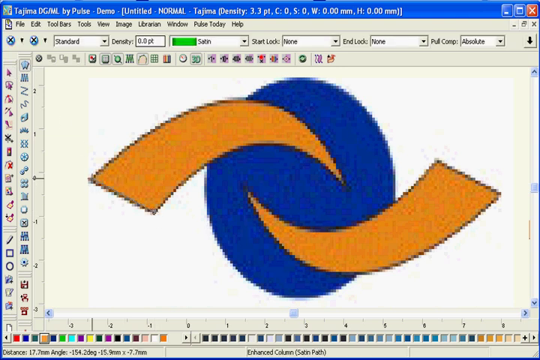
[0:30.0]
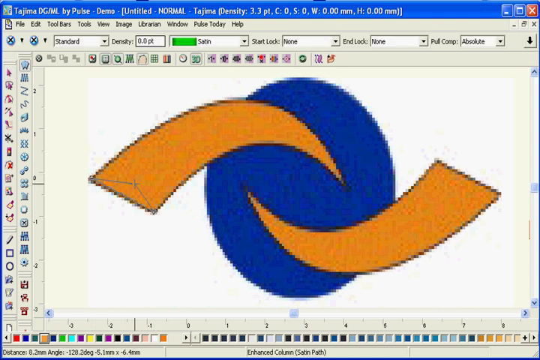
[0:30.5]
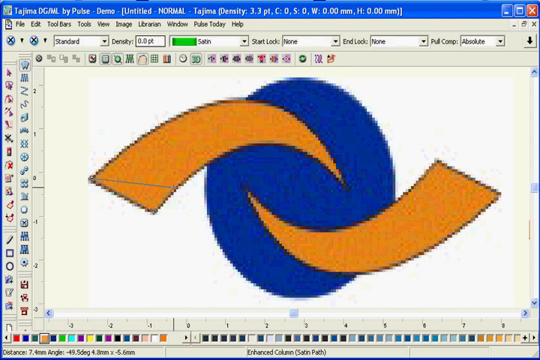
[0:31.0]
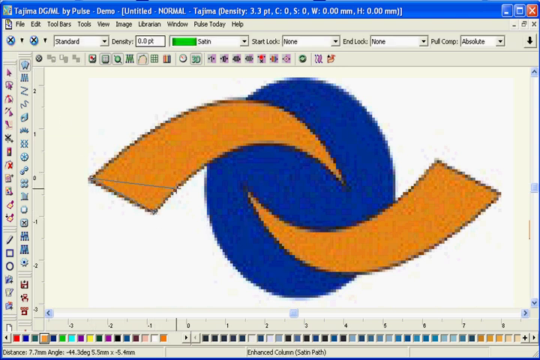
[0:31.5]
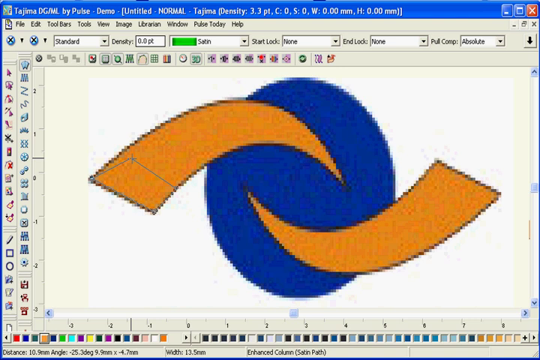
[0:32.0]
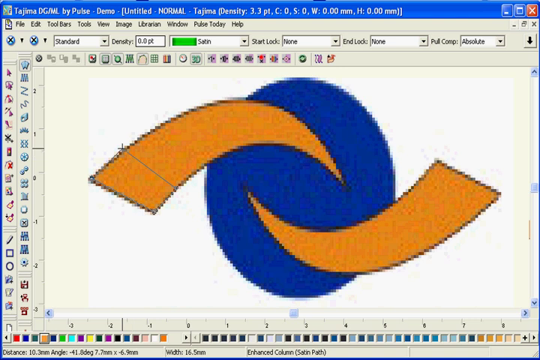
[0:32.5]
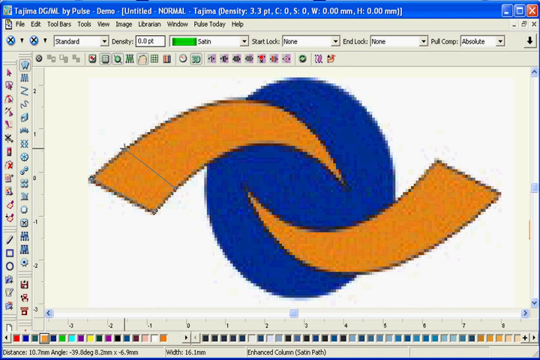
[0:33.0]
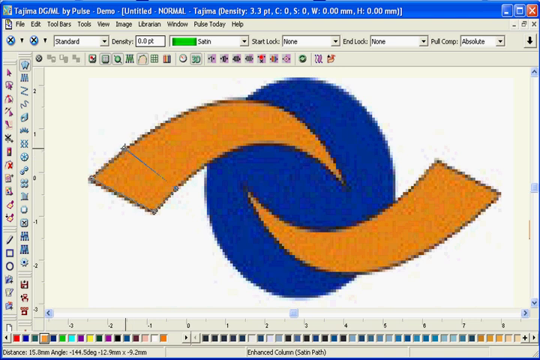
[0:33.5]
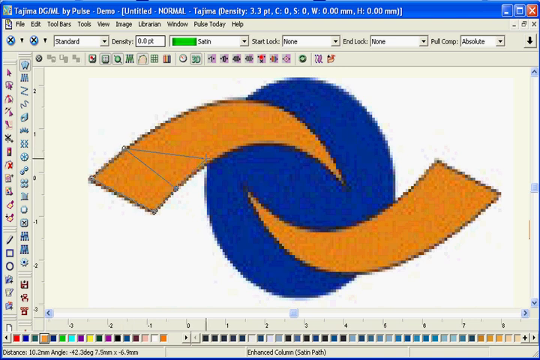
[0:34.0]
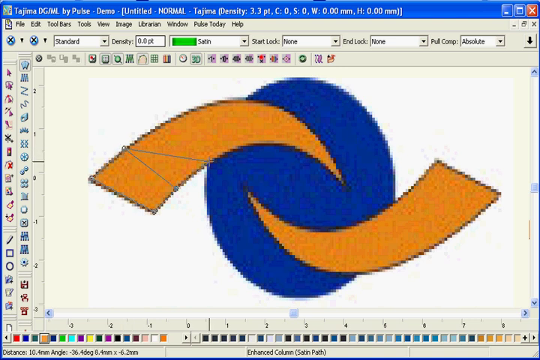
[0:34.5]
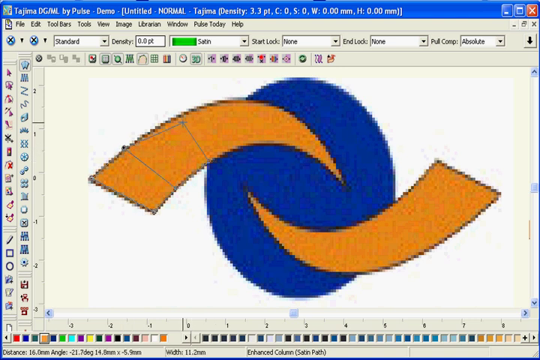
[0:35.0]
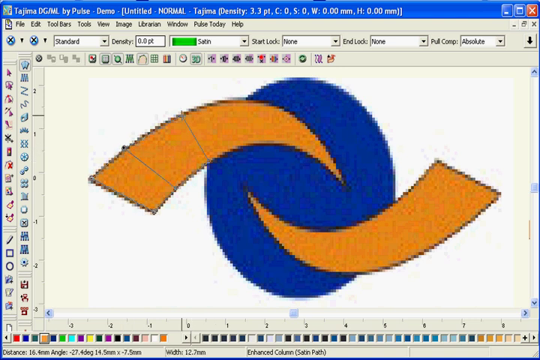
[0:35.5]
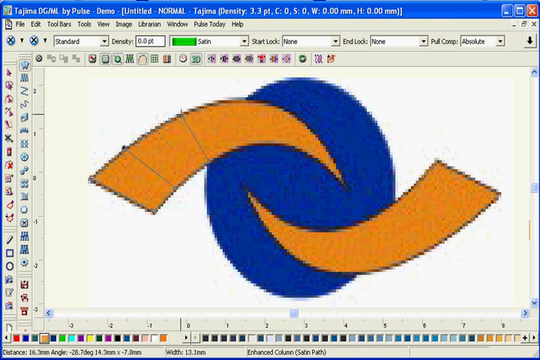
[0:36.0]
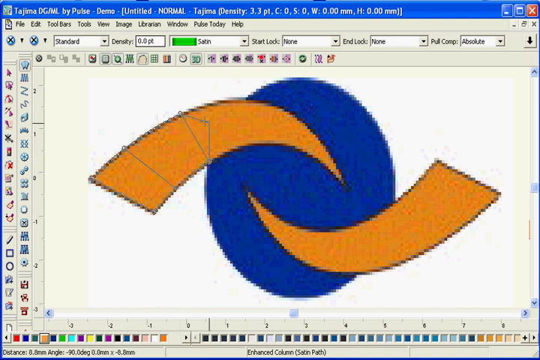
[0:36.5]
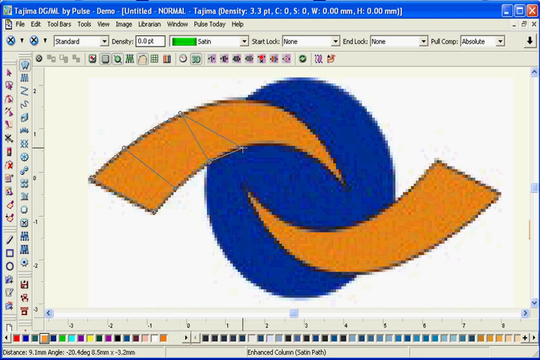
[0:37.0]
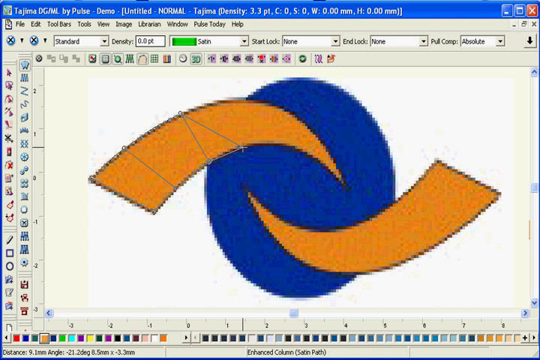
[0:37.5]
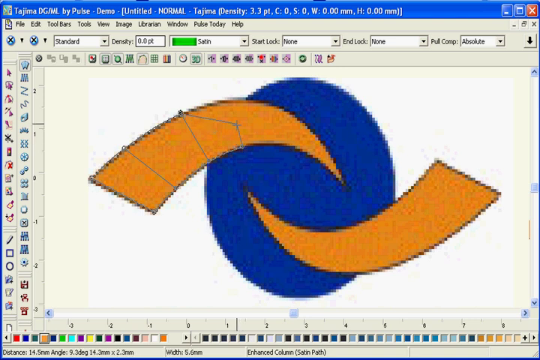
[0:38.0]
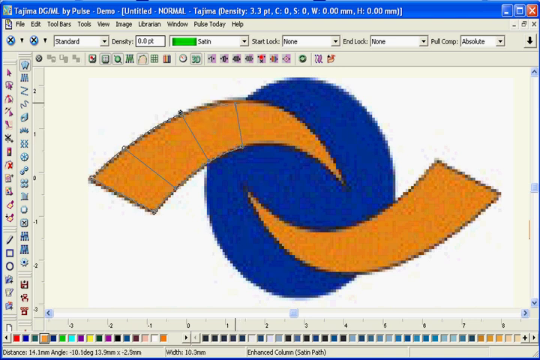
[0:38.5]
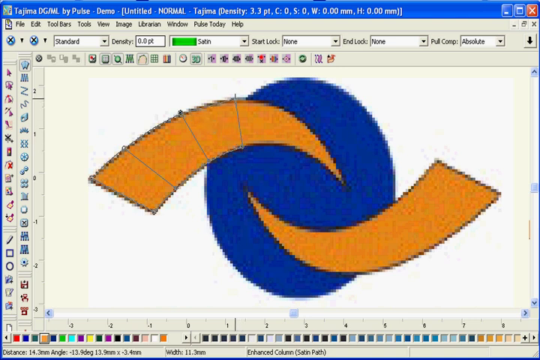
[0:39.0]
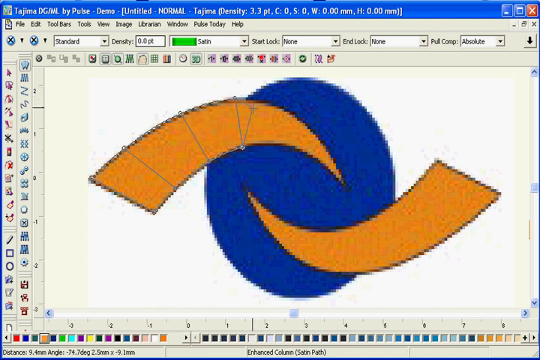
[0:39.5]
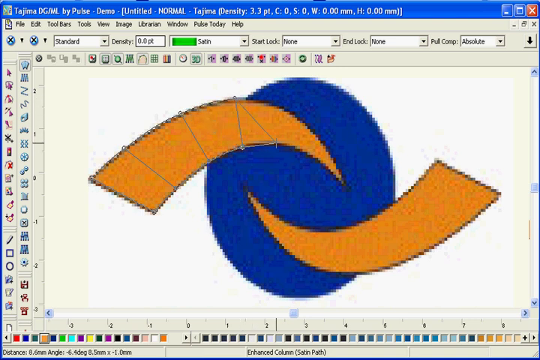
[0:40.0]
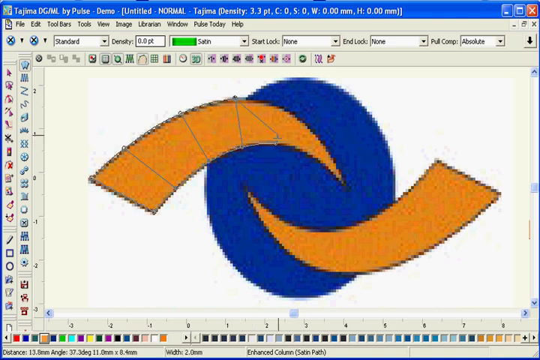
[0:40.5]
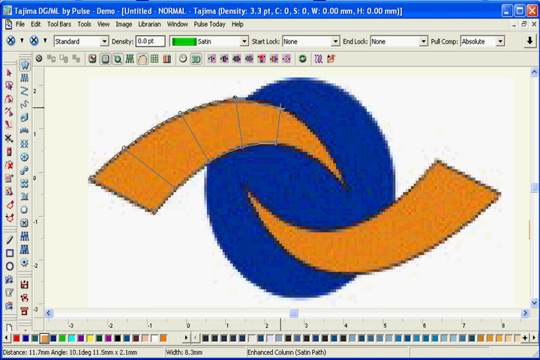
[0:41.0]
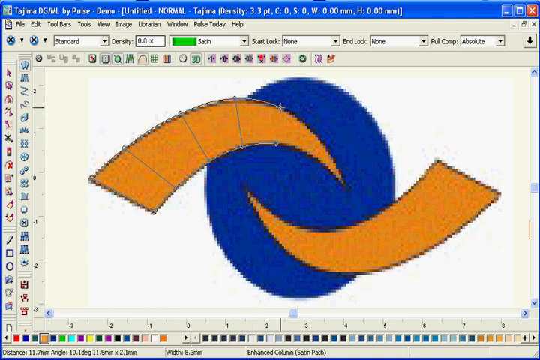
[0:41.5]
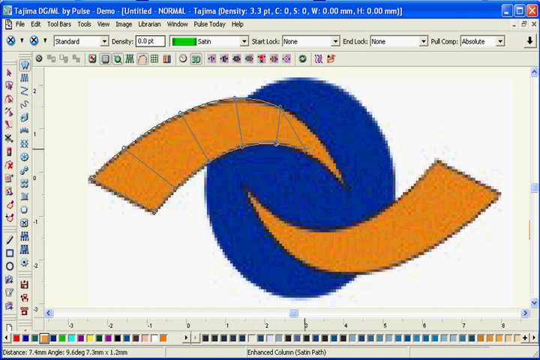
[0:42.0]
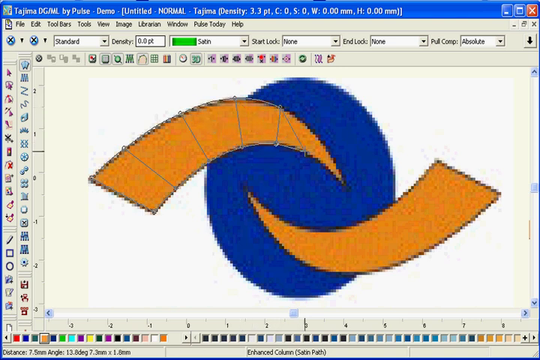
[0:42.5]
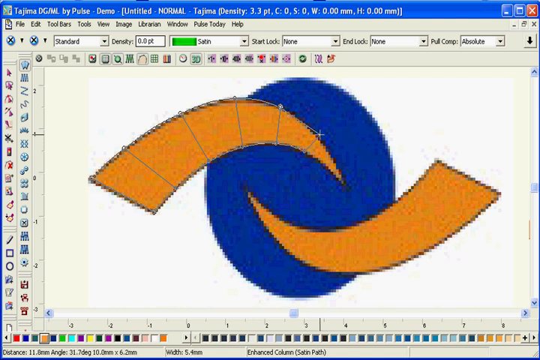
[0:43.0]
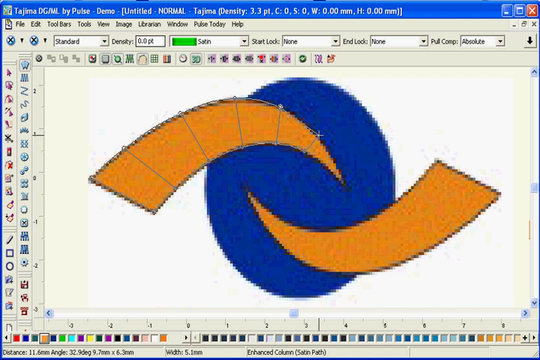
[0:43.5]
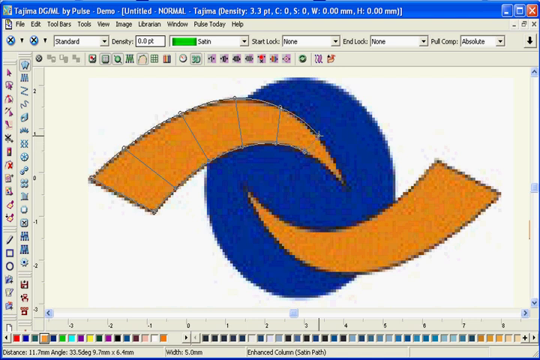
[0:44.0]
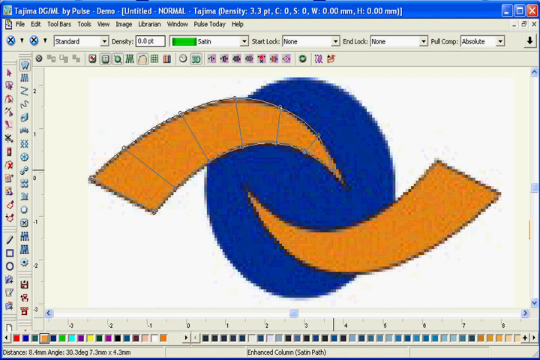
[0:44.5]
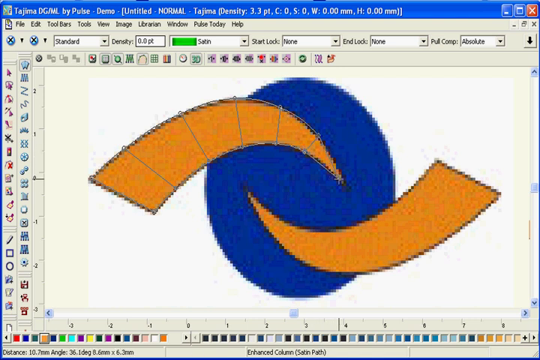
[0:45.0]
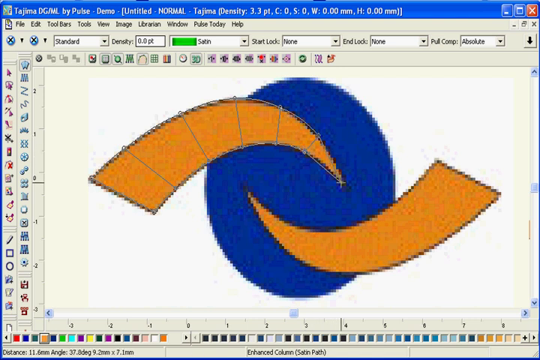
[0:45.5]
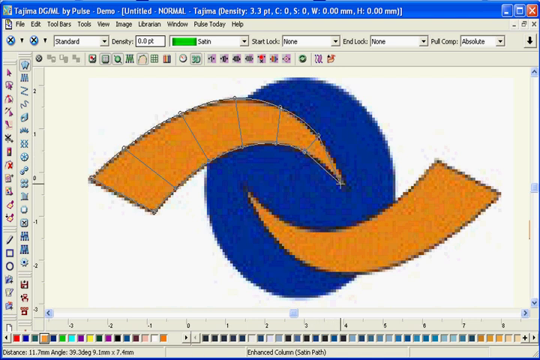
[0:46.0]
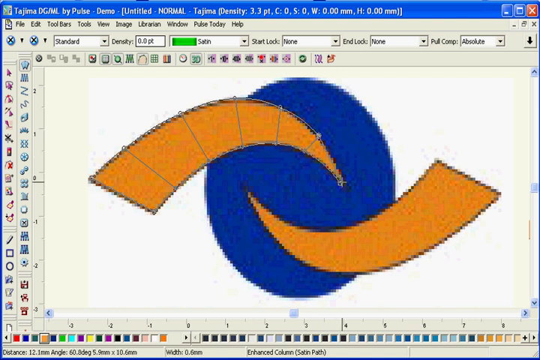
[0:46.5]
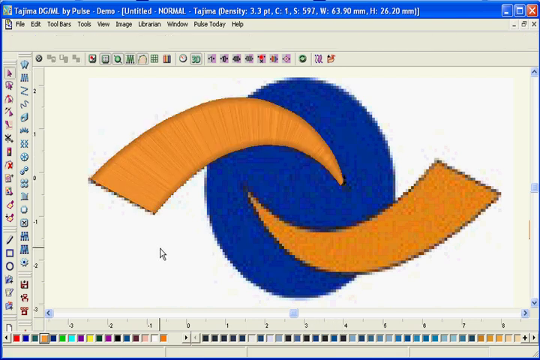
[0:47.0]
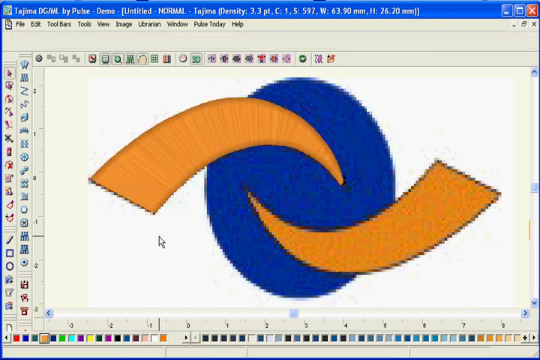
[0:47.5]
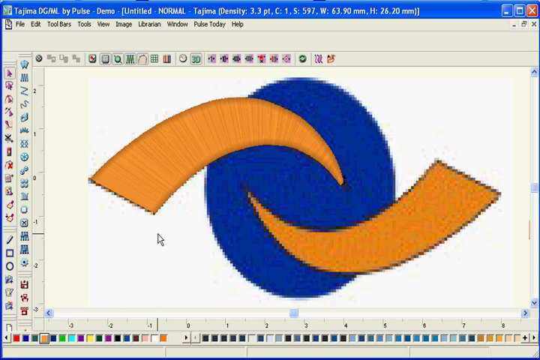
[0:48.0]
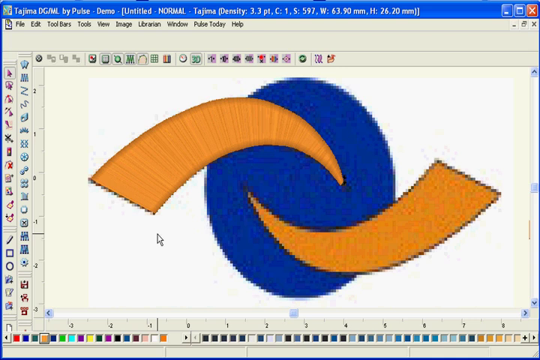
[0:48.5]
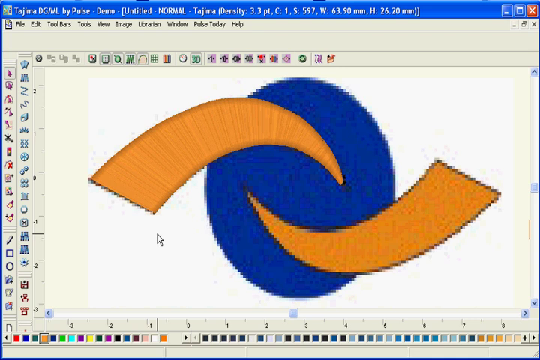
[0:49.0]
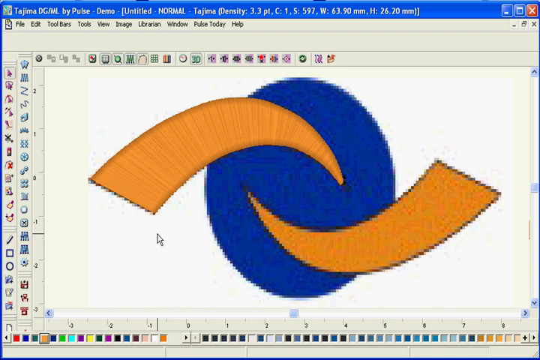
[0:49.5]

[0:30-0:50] The computer screen shows a blue sphere taking up about a fourth of the screen in the middle. At two places, an orange shape goes into the blue sphere; it is wide on the ends, gets narrow as it goes towards the blue shape, and is circular at the top. There are two of them, one at the top and one at the bottom. A person uses the mouse to measure the width of the orange strip and sections it off into different sections. The top orange piece is now sectioned off into six sections.